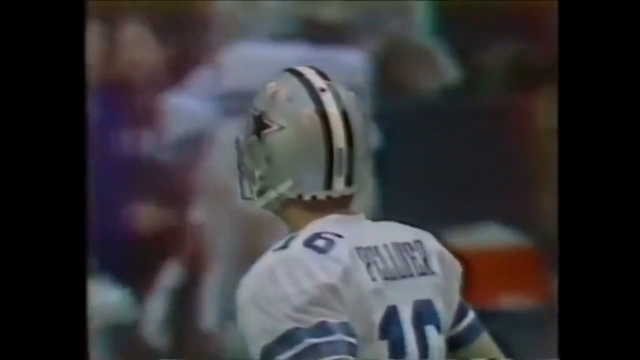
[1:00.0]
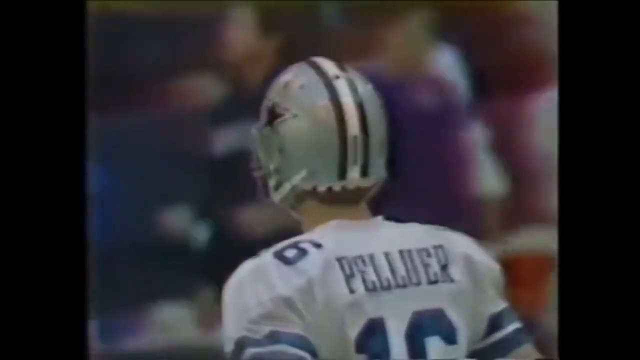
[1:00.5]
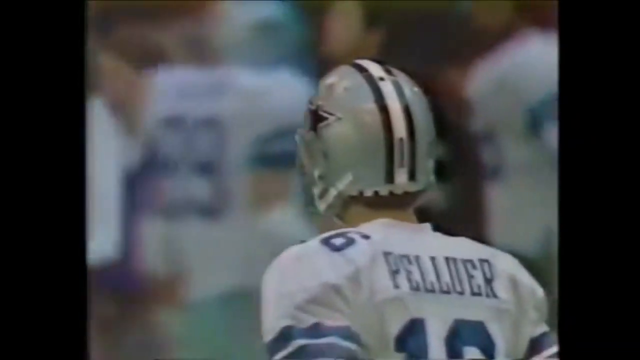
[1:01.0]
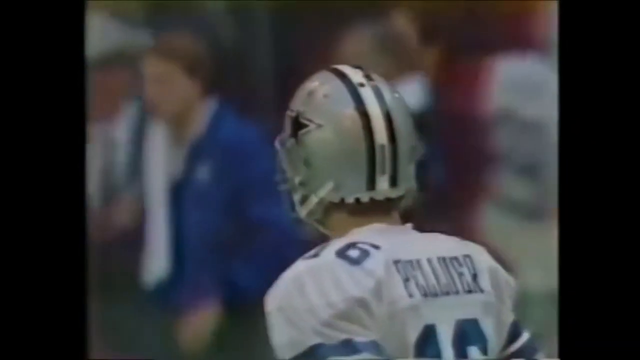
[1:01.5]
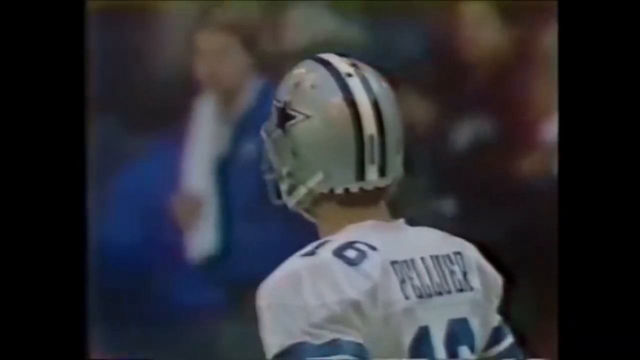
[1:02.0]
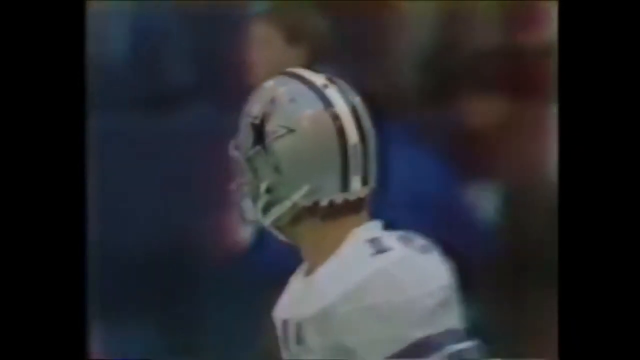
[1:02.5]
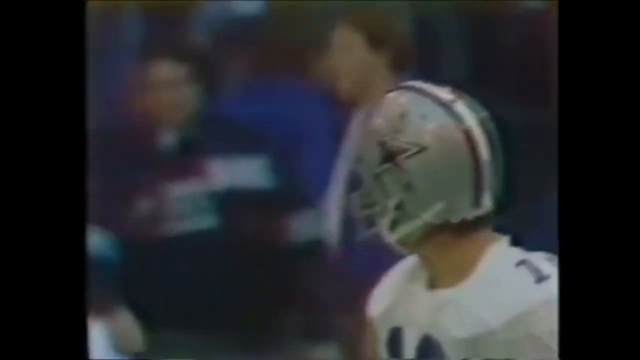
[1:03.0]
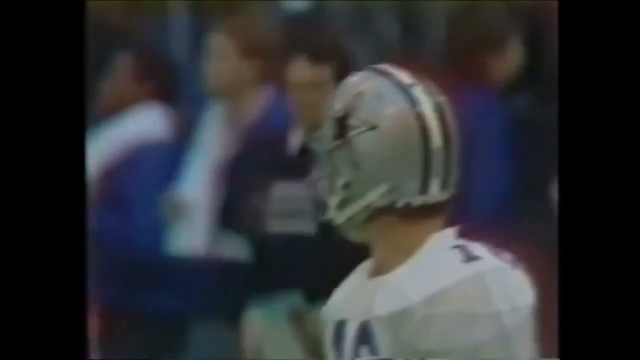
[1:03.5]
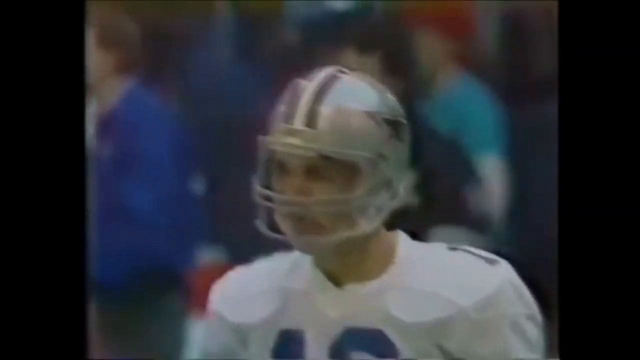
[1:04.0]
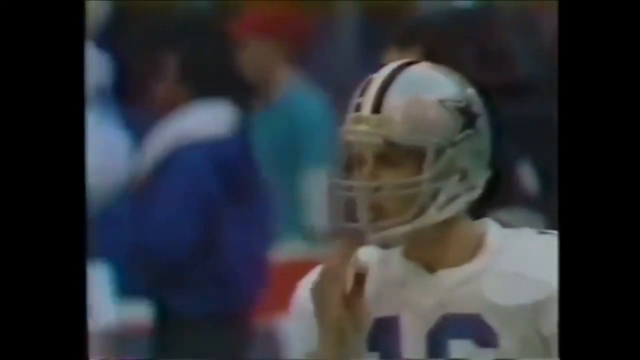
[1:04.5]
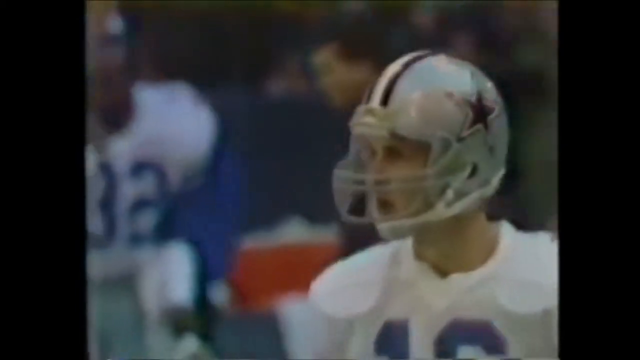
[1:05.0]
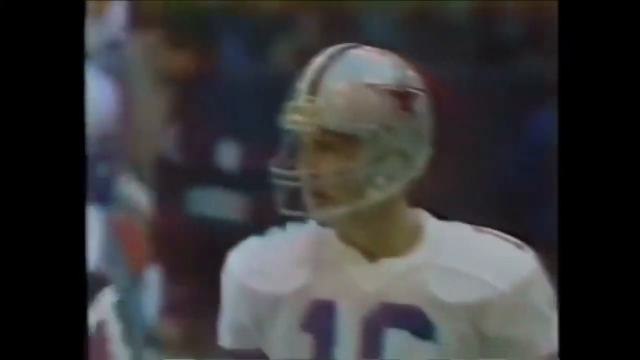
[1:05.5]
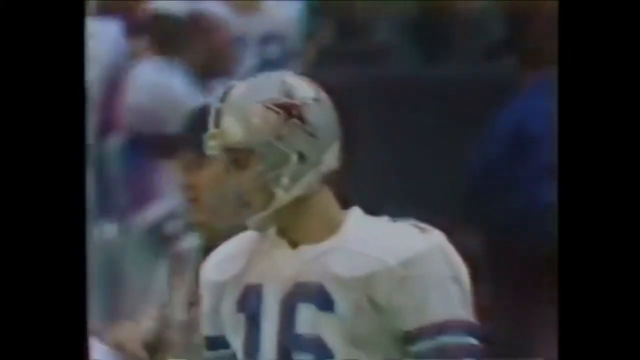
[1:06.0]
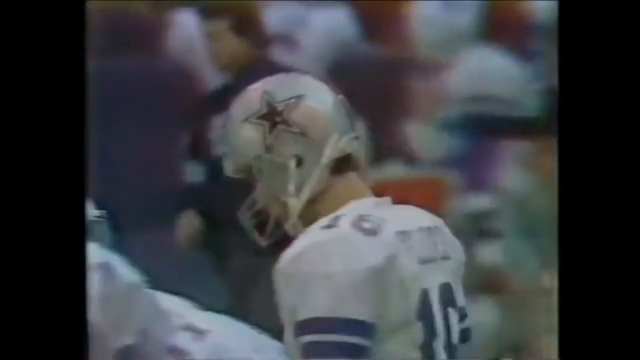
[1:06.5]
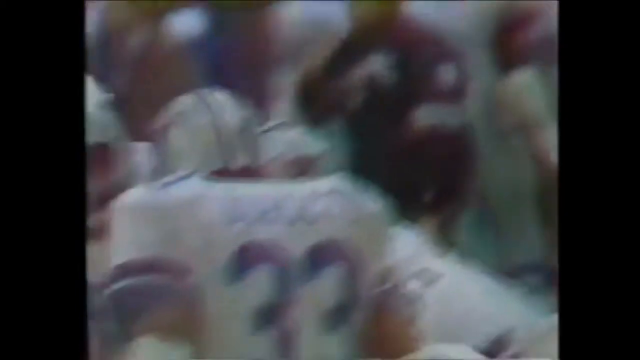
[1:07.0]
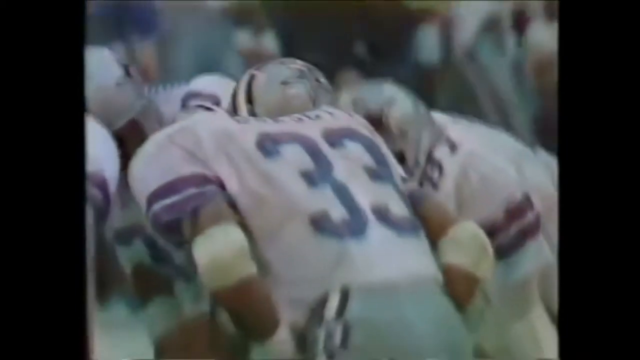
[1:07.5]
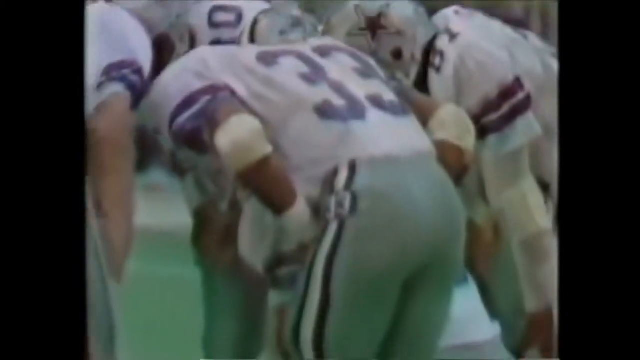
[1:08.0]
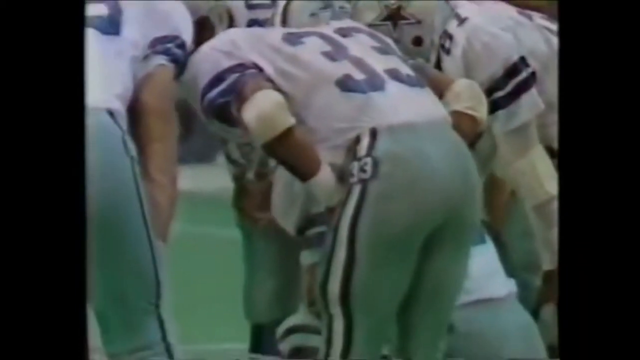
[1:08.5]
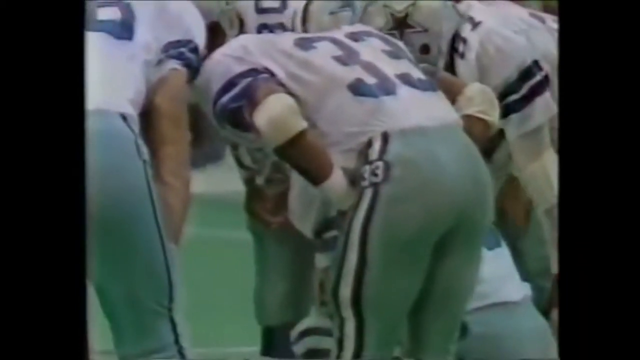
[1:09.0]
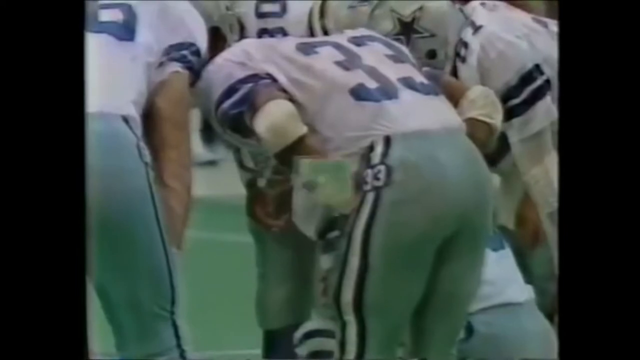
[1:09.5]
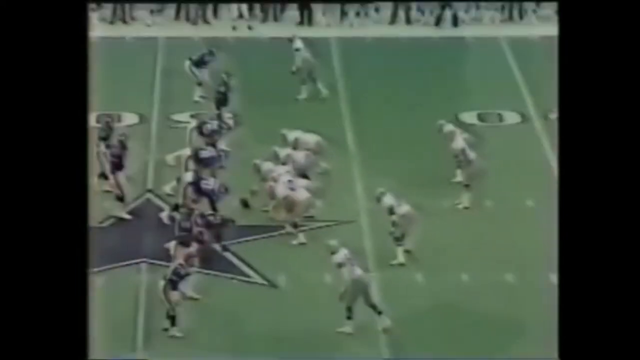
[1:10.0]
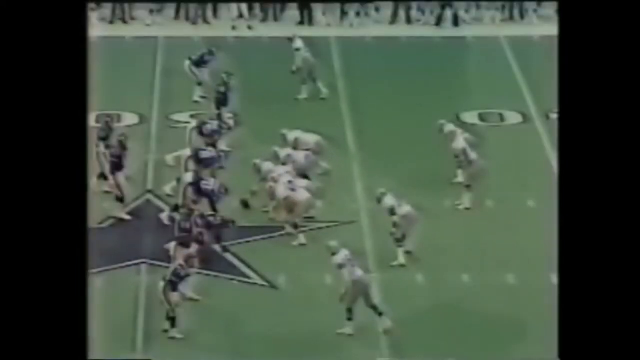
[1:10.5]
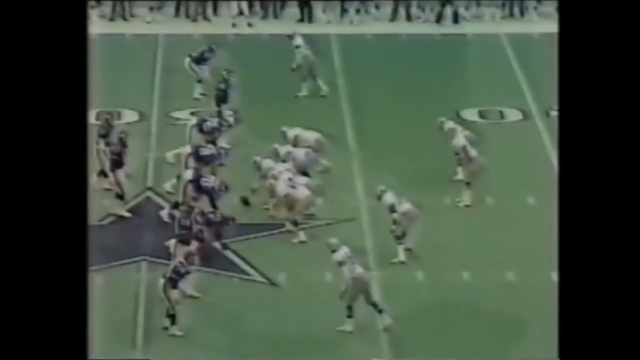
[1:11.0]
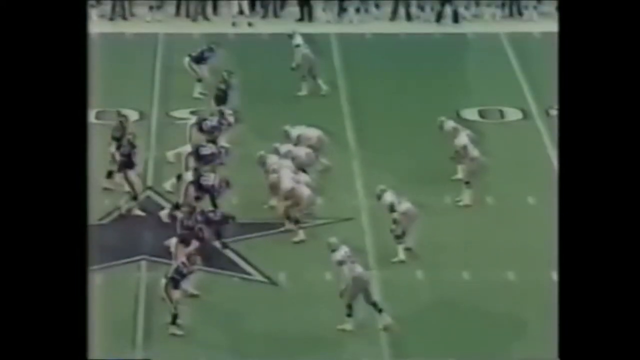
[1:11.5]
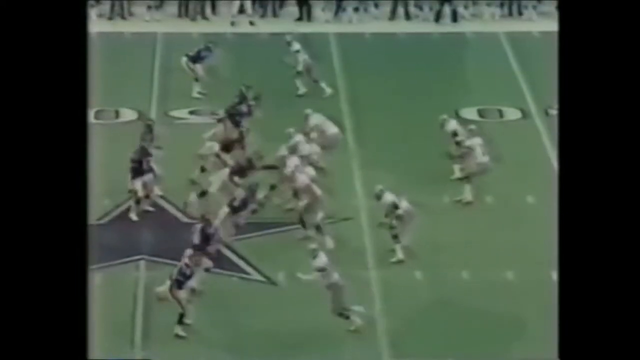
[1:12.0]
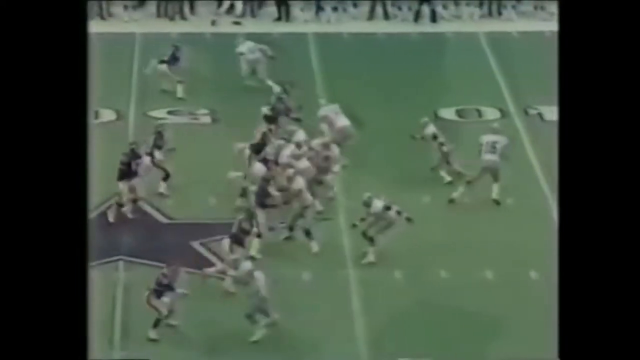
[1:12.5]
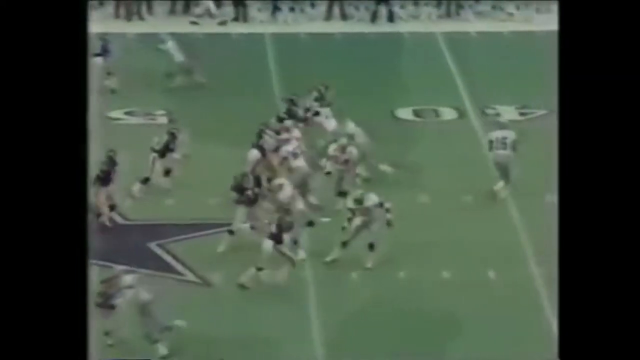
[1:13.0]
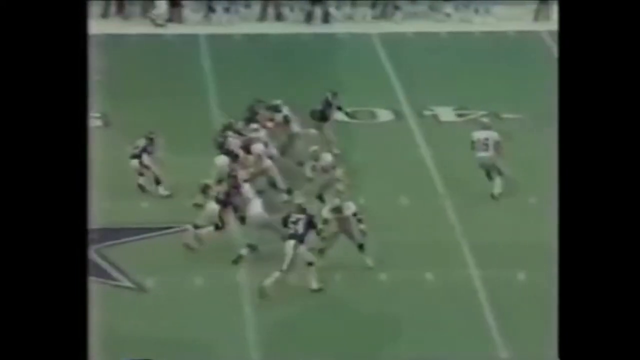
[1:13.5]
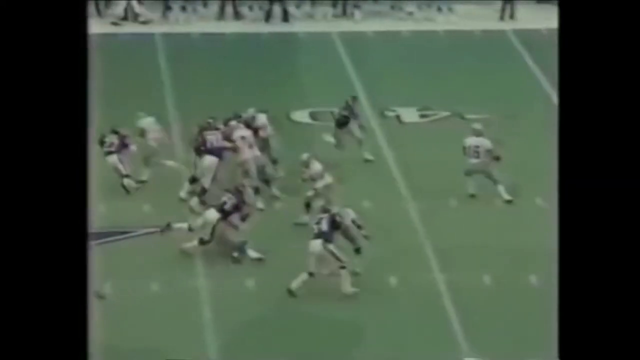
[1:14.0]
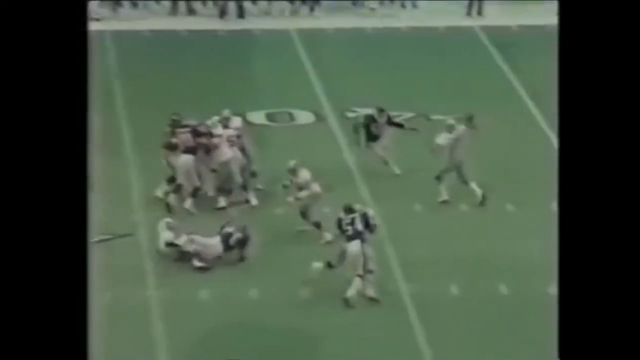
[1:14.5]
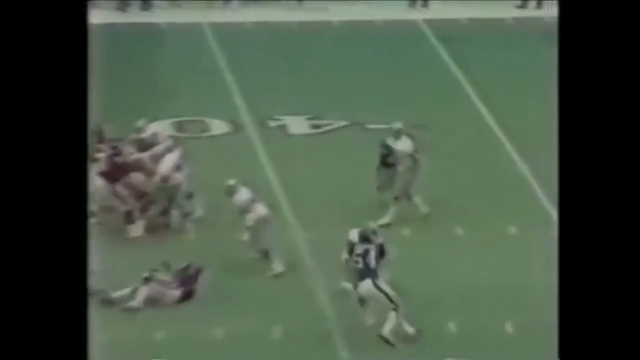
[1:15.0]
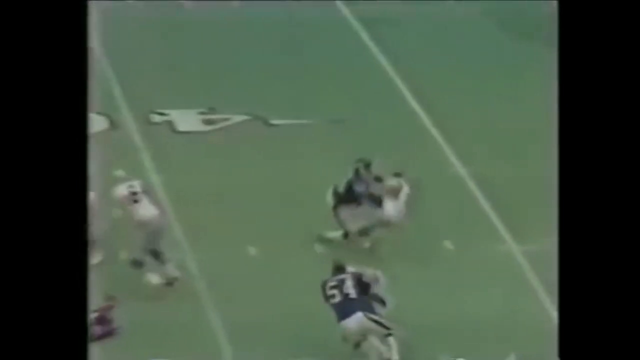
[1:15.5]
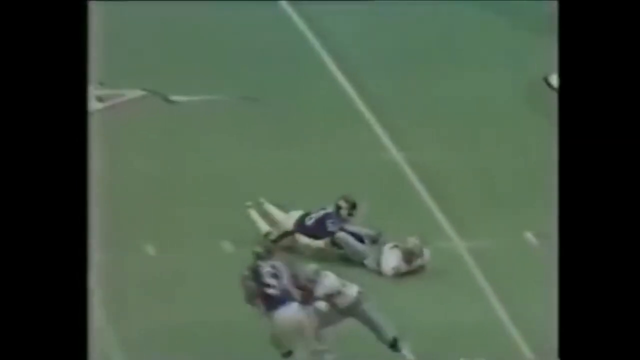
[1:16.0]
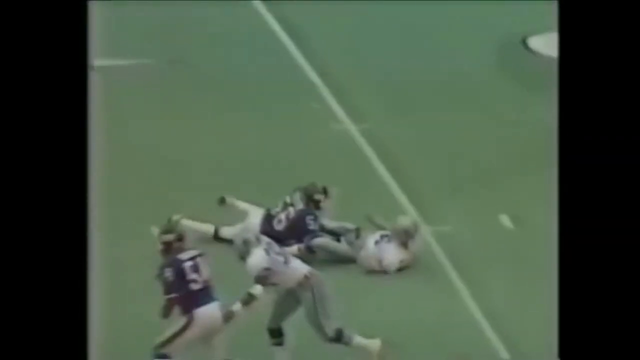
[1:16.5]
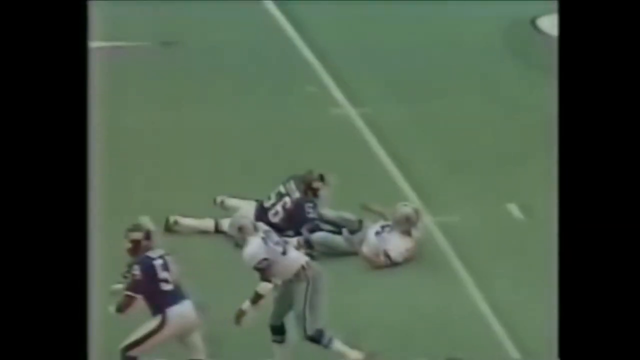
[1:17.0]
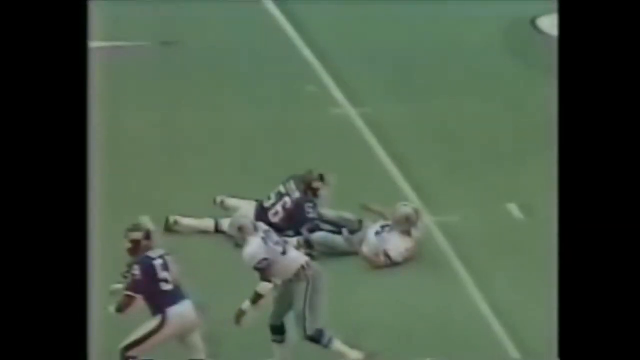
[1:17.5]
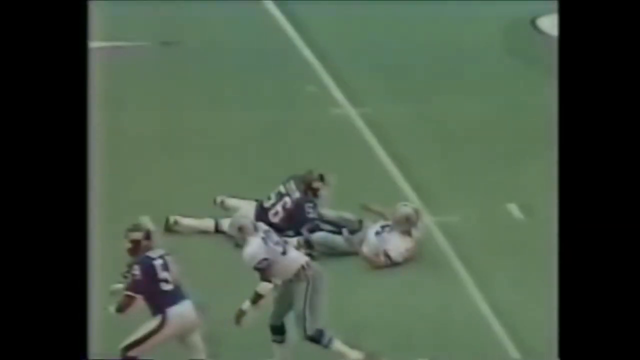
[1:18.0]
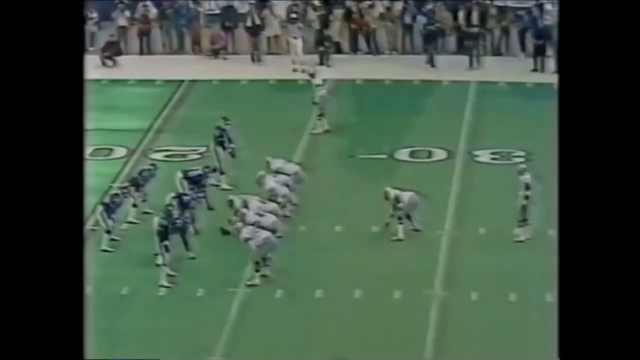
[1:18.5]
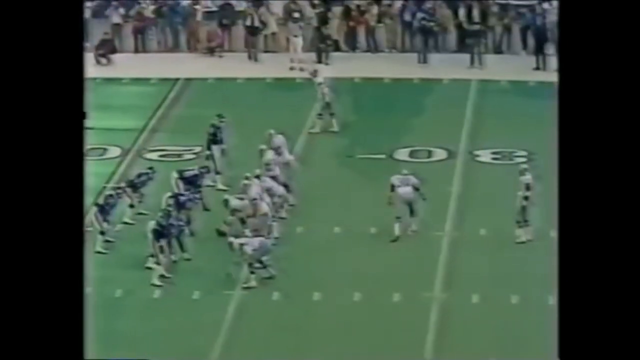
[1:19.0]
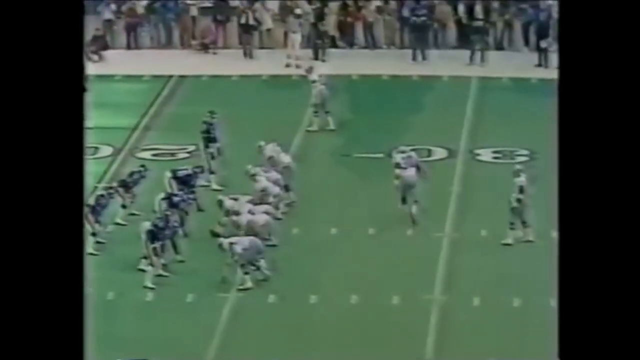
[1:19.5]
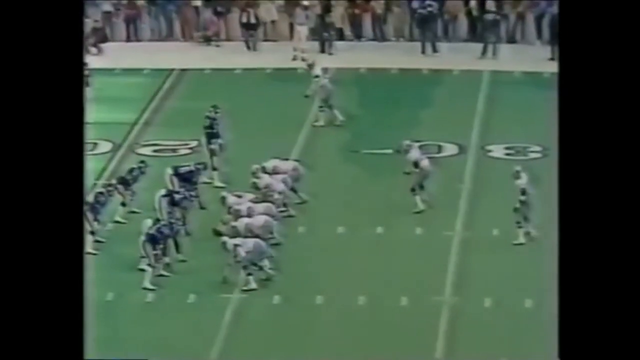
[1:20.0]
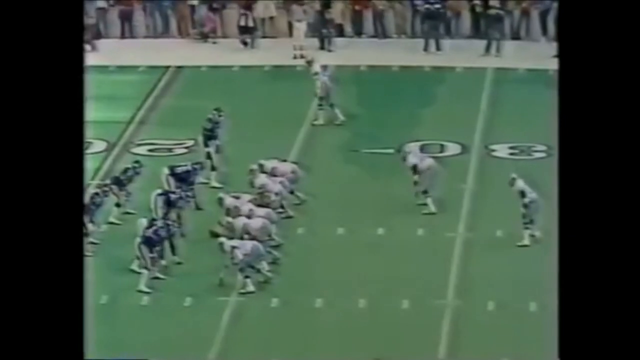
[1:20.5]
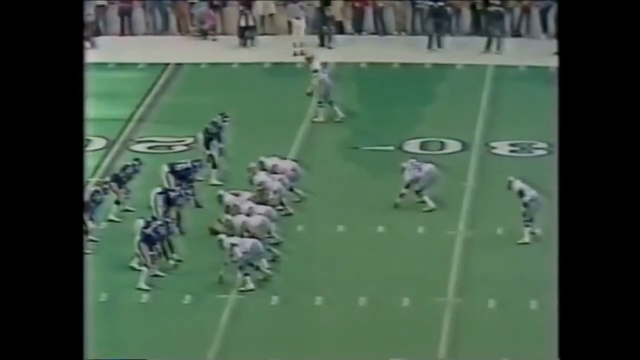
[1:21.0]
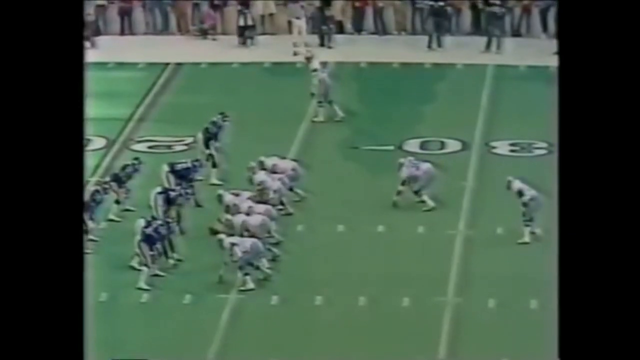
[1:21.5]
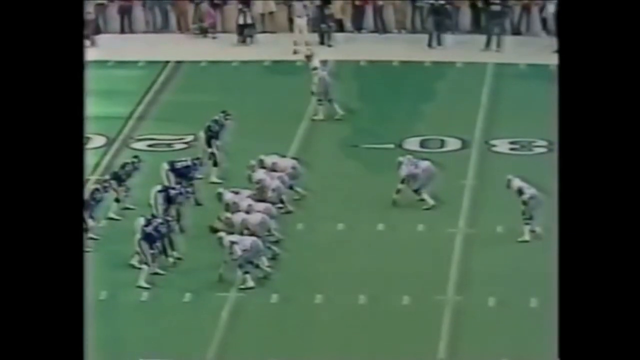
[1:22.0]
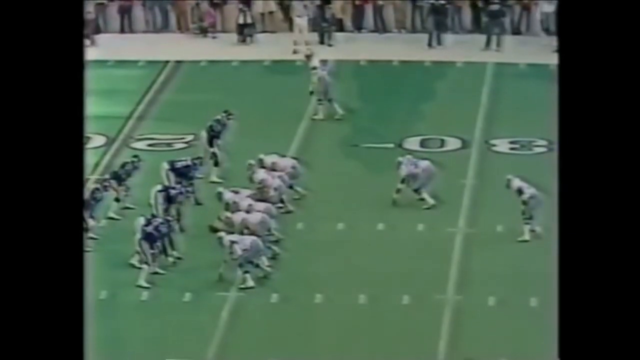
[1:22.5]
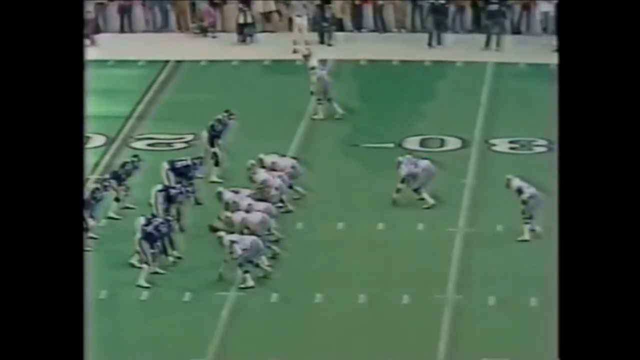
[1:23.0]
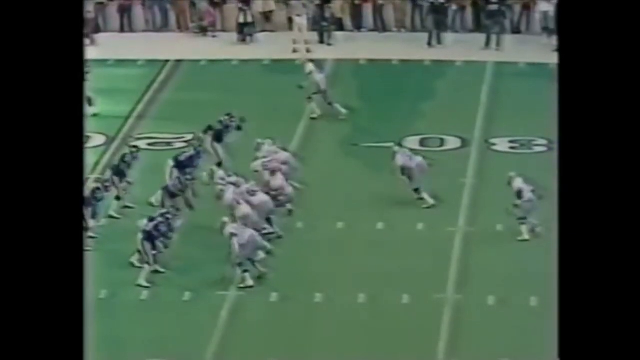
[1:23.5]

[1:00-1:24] Vintage footage from an old NFL game seems to continue, pretty grainy, out of focus and very poor quality, with sort of faded colors; it is probably a game from the 70s. One of the teams is the Dallas Cowboys, identifiable by their white jerseys with blue lettering and silver helmets with a blue star on the side. The first shot shows Cowboys player number 16, whose jersey back says "Pelluer." He walks around and touches his mouth. He and some other Cowboys players huddle together, and he kneels down. An overhead view shows the last play of the game: the team lines up, the ball is hiked, and a Cowboys player is tackled after he throws the ball, by player 56 from the opposing team. More highlights of the game follow.